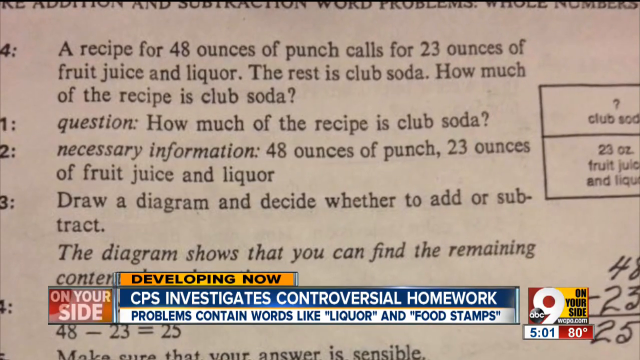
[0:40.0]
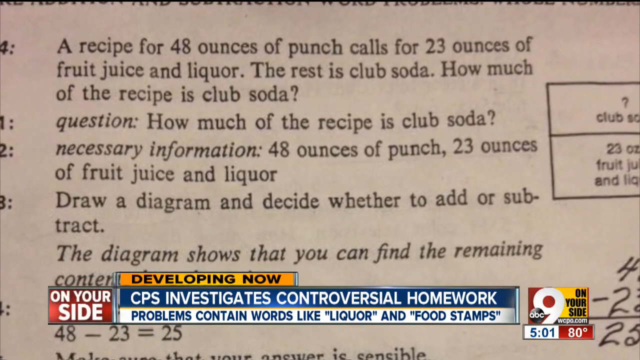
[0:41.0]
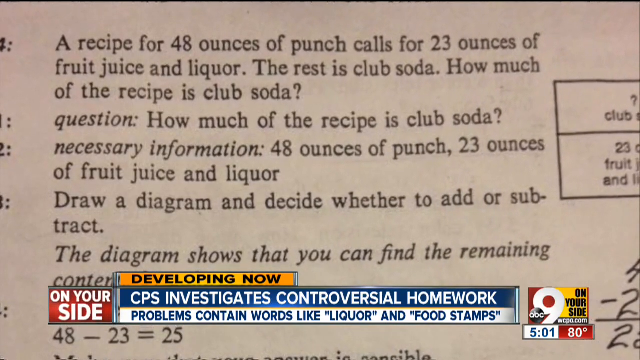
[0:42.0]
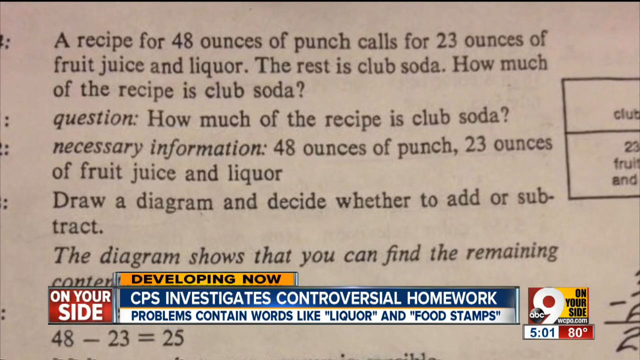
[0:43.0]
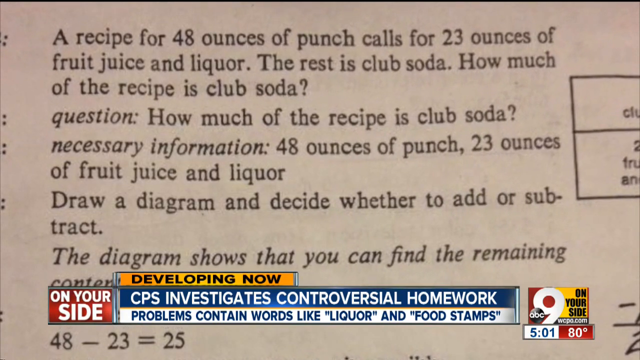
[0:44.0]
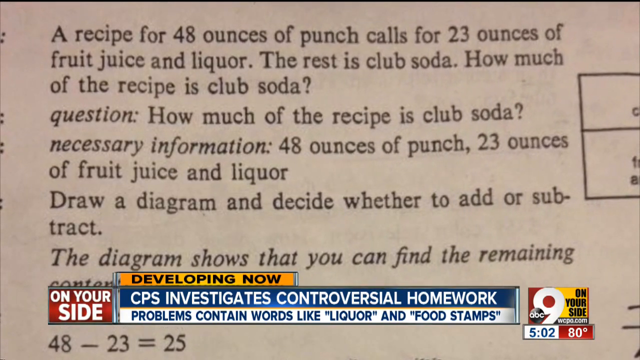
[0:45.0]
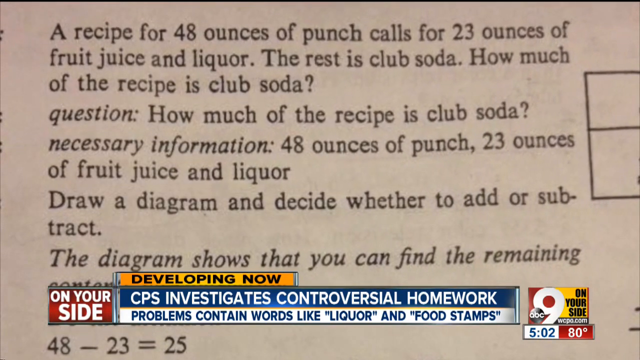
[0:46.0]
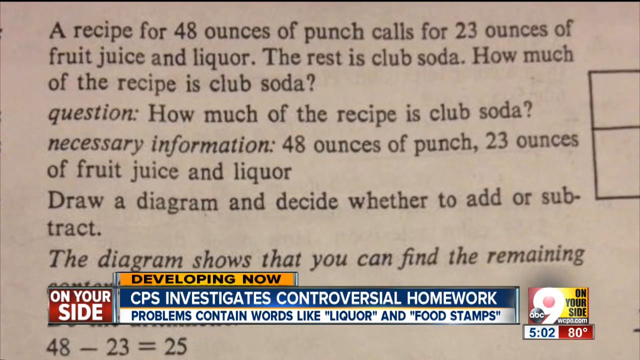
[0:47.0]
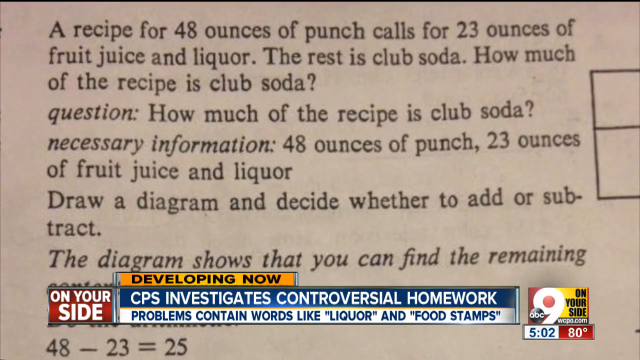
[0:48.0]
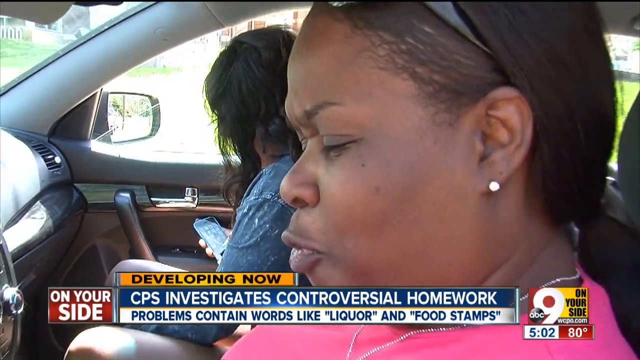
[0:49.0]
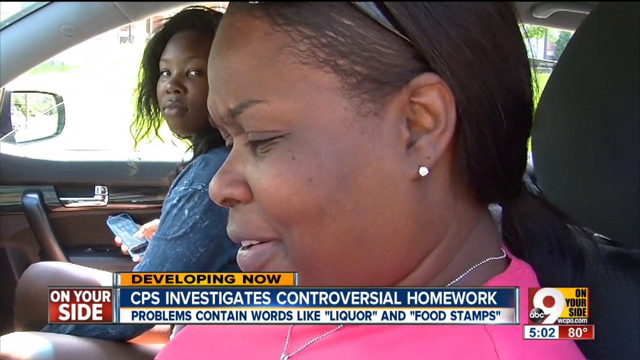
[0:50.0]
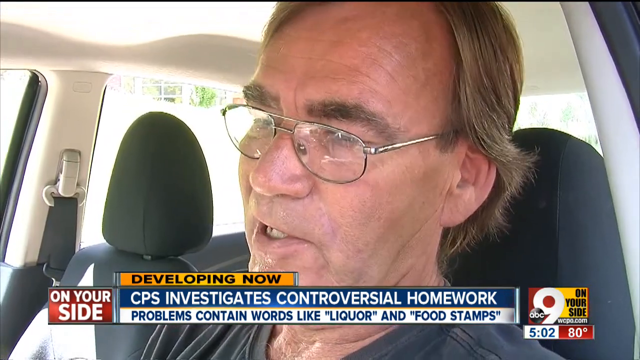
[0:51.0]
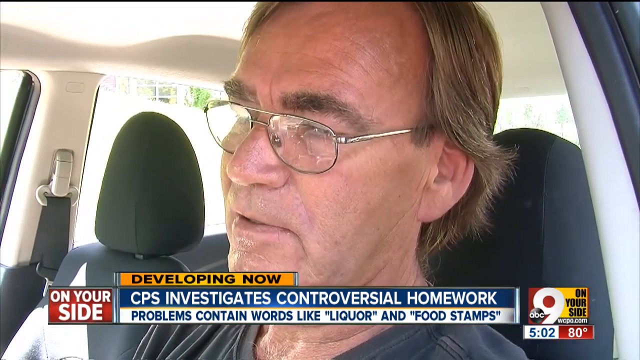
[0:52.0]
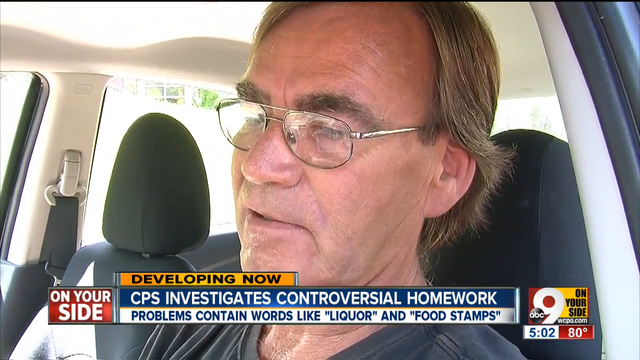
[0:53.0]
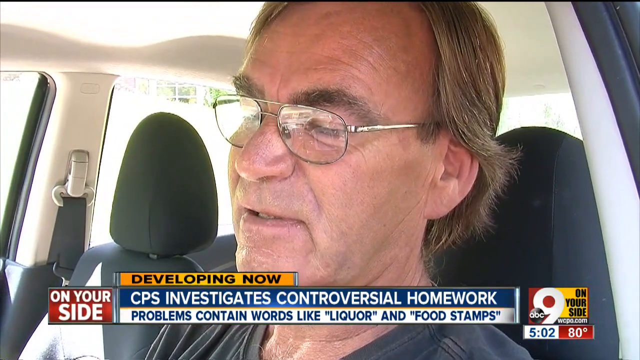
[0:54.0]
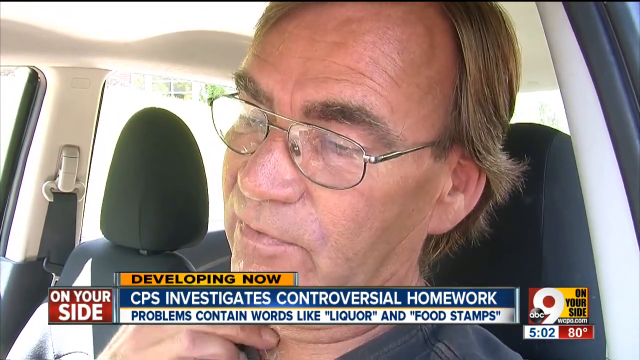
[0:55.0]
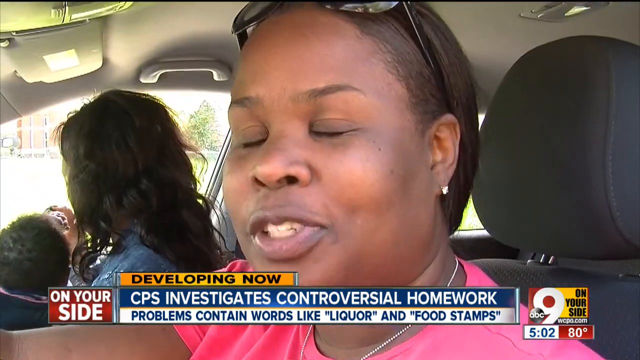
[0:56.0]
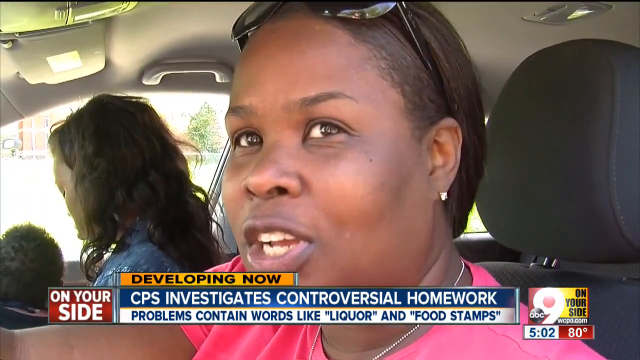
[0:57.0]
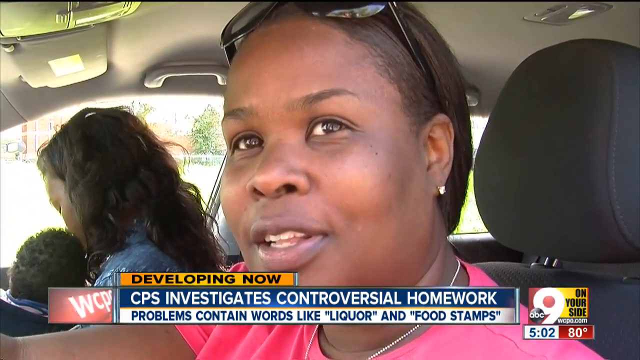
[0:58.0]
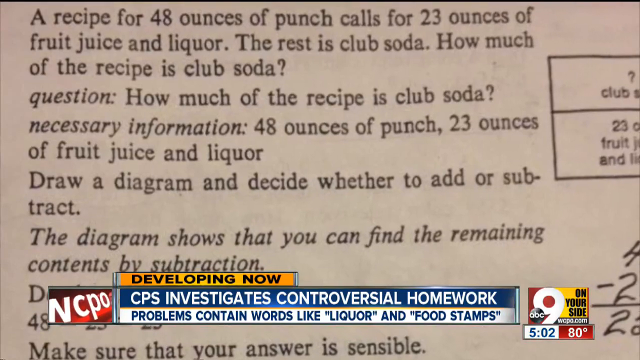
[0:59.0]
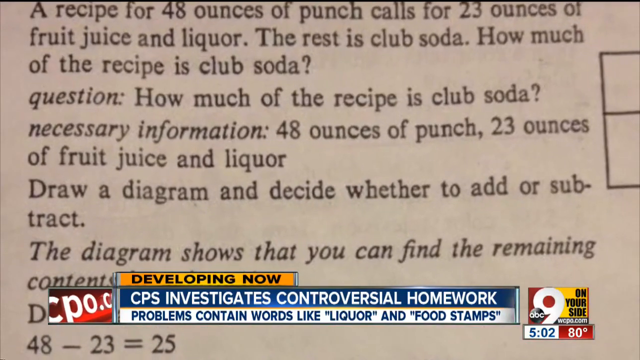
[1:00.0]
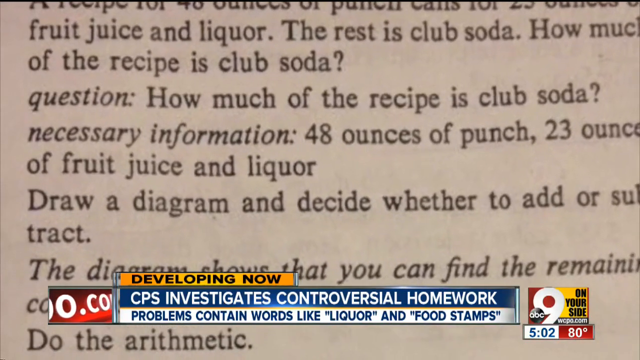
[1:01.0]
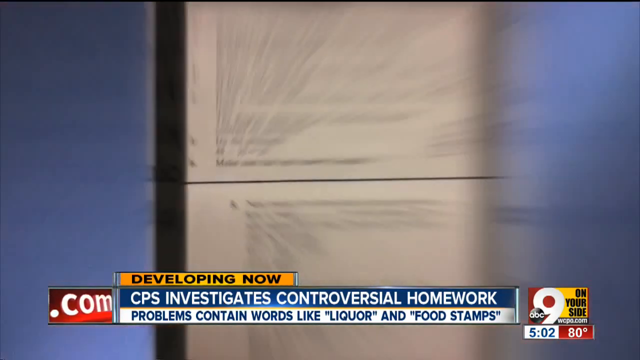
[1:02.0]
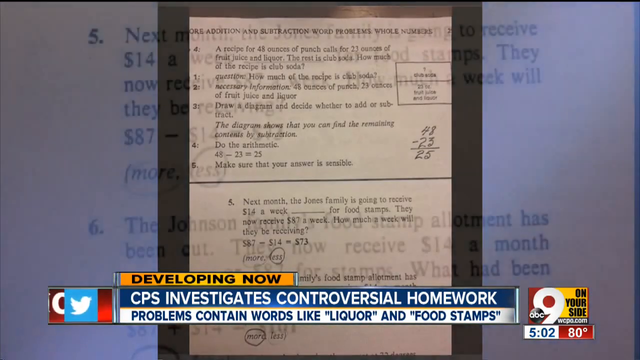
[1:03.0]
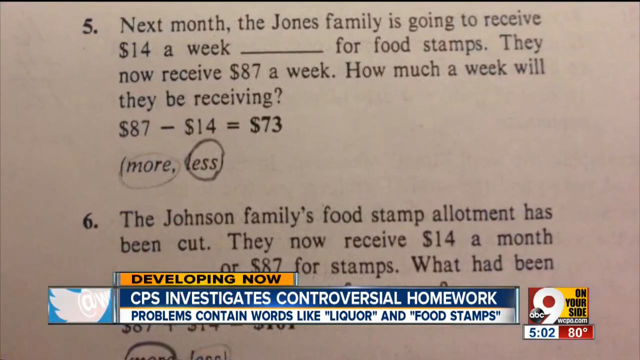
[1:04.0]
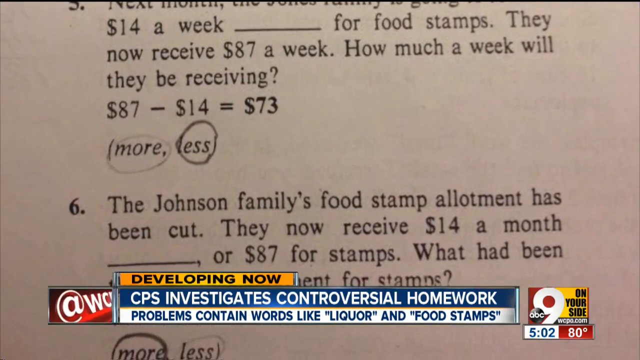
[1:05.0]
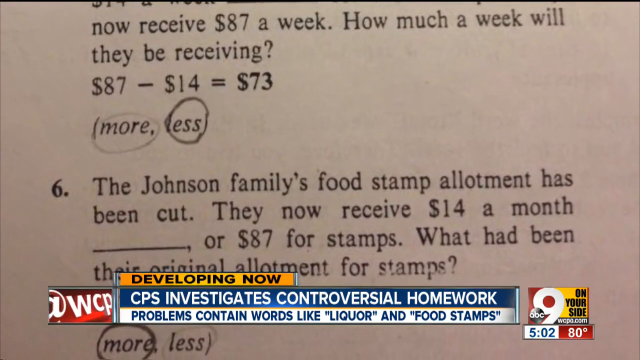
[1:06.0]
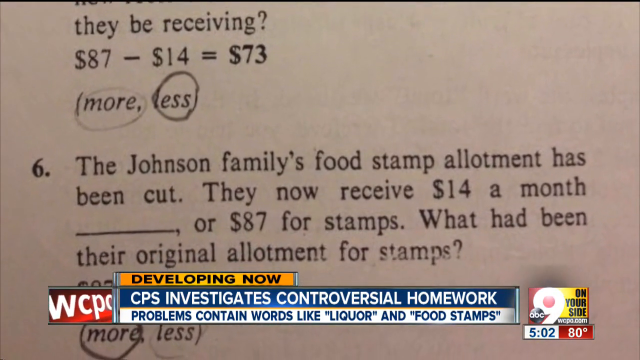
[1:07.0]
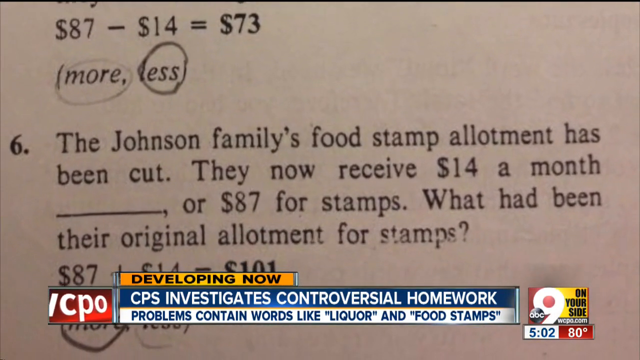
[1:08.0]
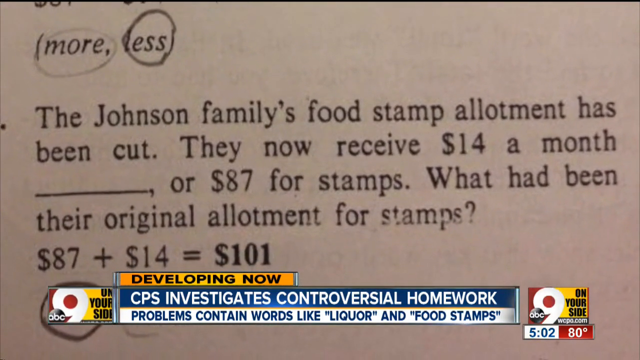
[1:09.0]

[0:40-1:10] The news program shows "CPS Investigates Controversial Homework" at the bottom of the screen. The view zooms in on what is possibly a math problem, moving closer on the text. The screen also says "problems contain words like liquor and food stamps," apparently referencing that text. What appear to be two women sit in a car; seen from the driver's side, the driver looks down and speaks, while the passenger looks over at the camera as they use their phone with their right hand. A man with brown hair that sweeps over his ear and glasses speaks from the driver's side of his car and uses his right hand to kind of scratch his face. The video goes back to the two women: the driver speaks to the camera, and the passenger appears to be holding a child. The view then again zooms in on the text, on another problem about a food stamp allotment, and continues zooming in.